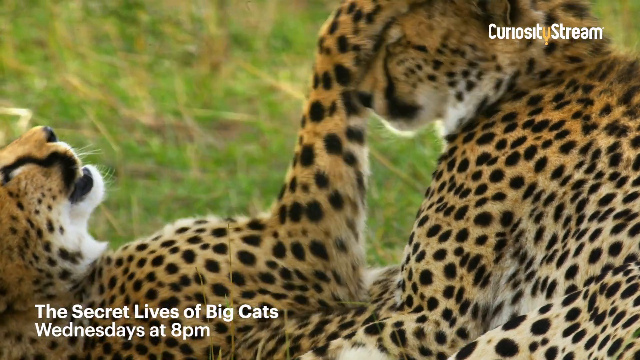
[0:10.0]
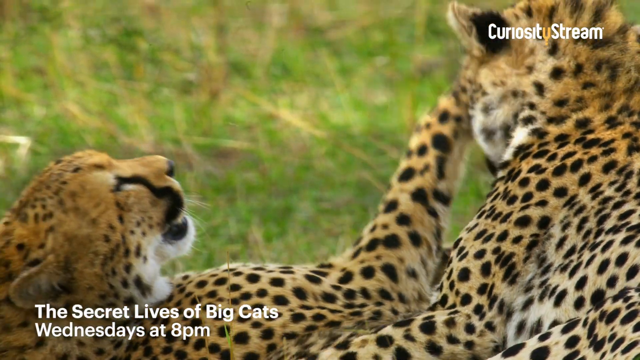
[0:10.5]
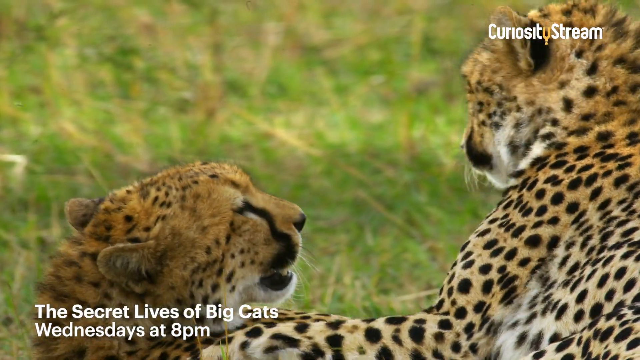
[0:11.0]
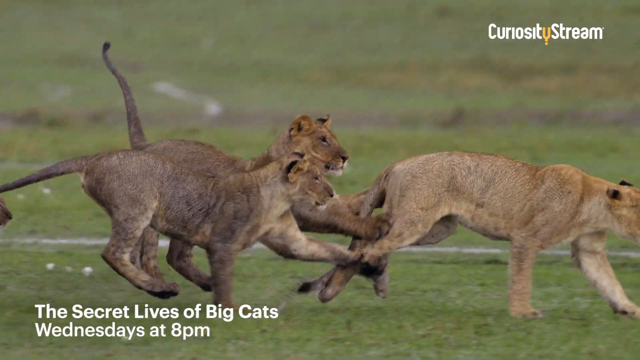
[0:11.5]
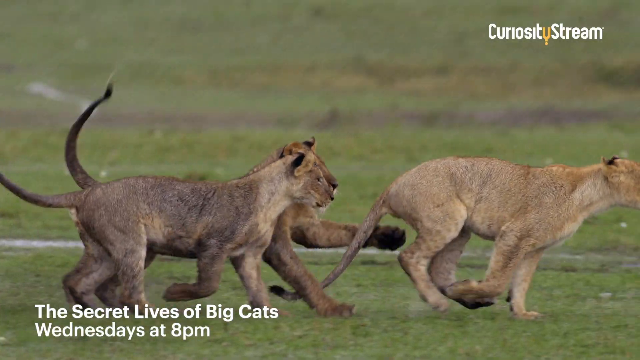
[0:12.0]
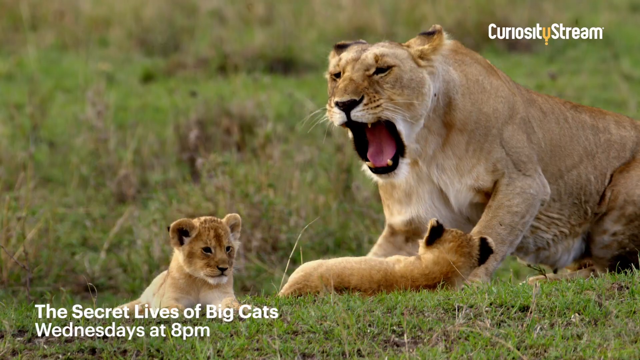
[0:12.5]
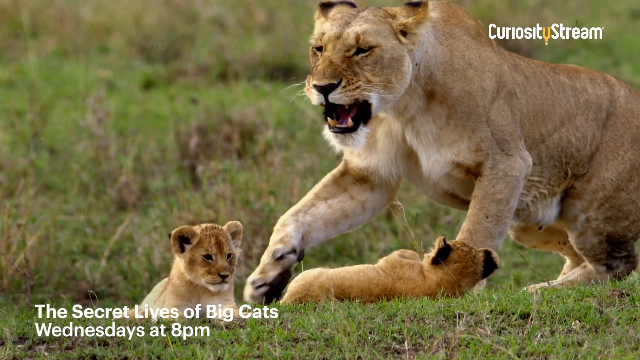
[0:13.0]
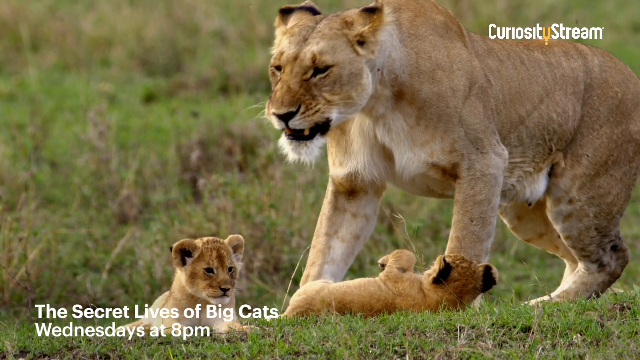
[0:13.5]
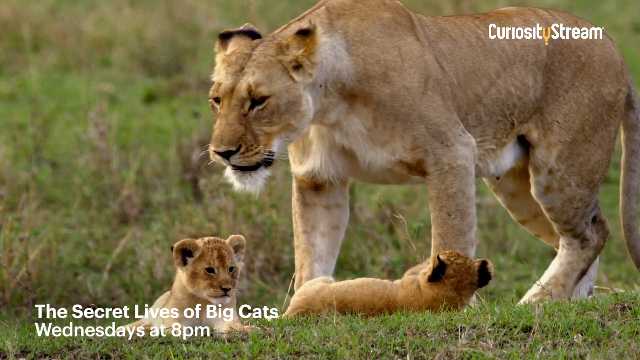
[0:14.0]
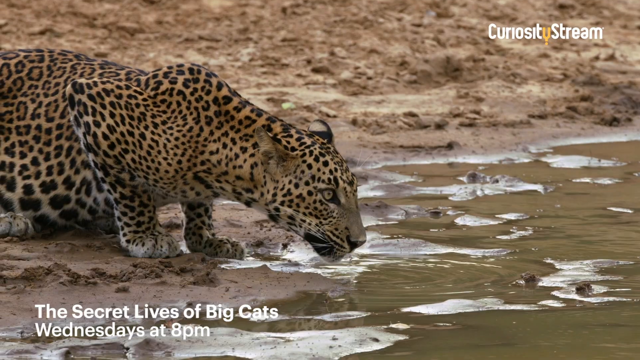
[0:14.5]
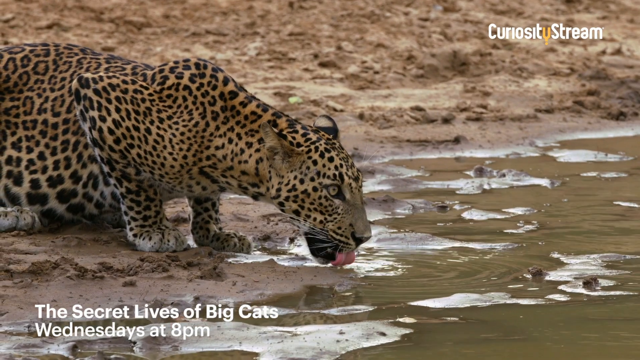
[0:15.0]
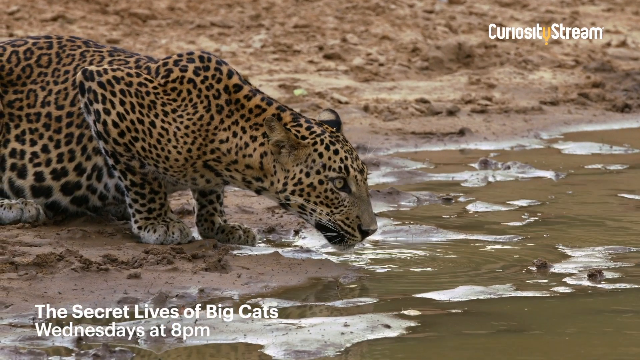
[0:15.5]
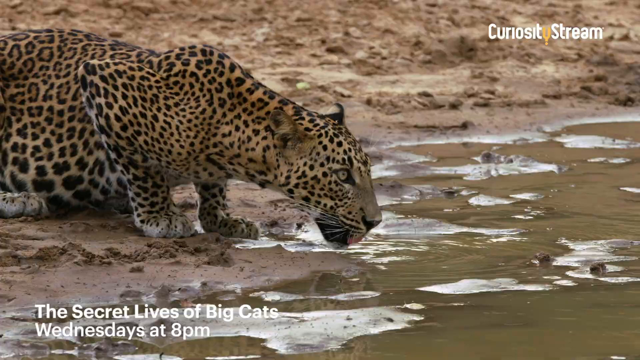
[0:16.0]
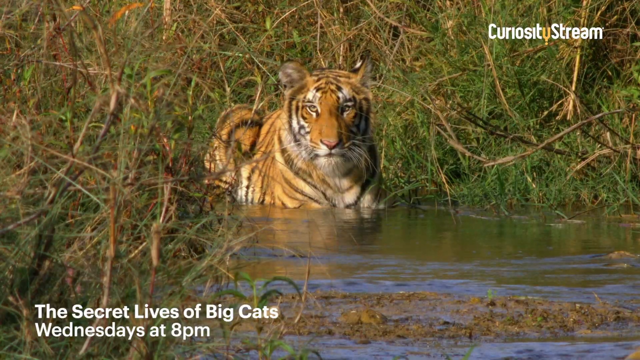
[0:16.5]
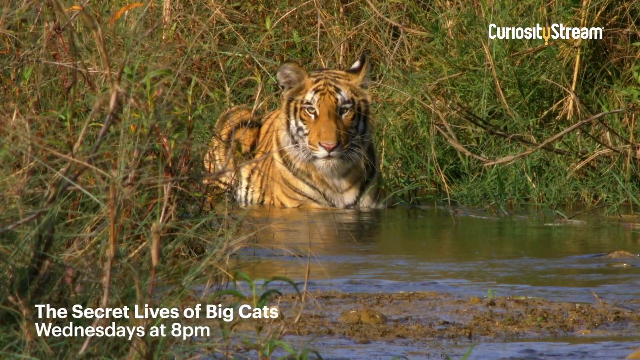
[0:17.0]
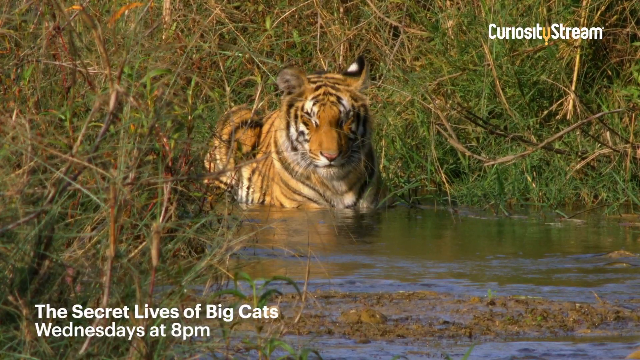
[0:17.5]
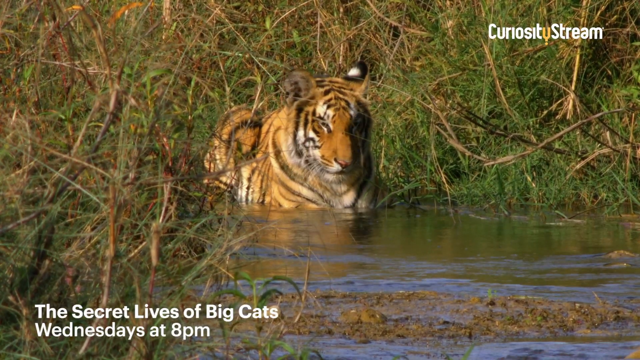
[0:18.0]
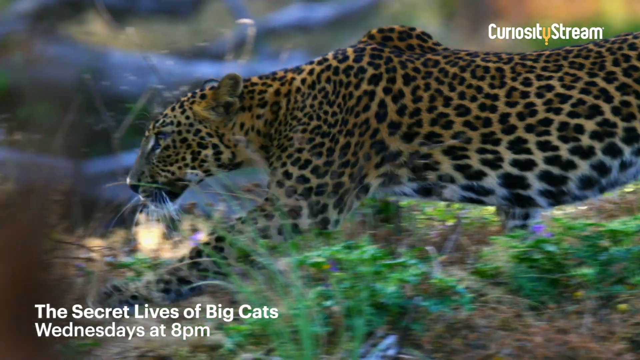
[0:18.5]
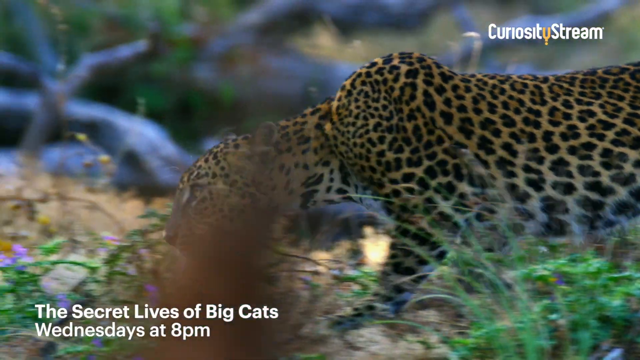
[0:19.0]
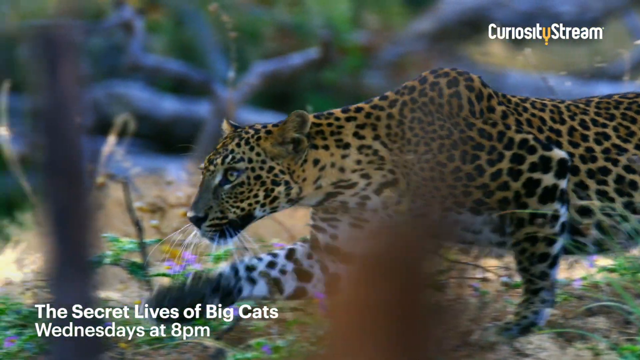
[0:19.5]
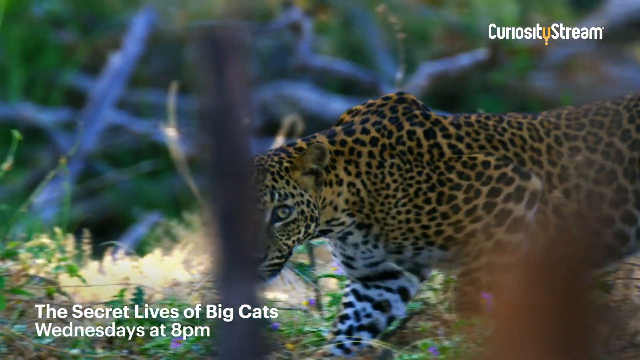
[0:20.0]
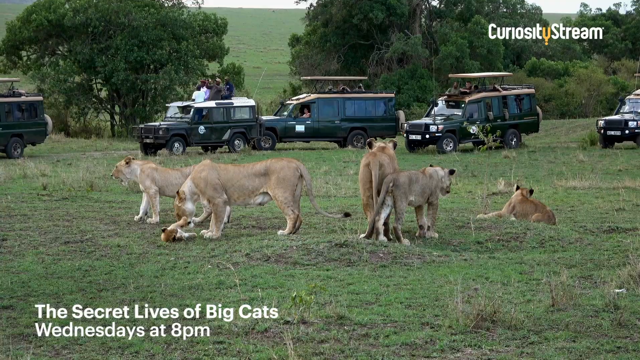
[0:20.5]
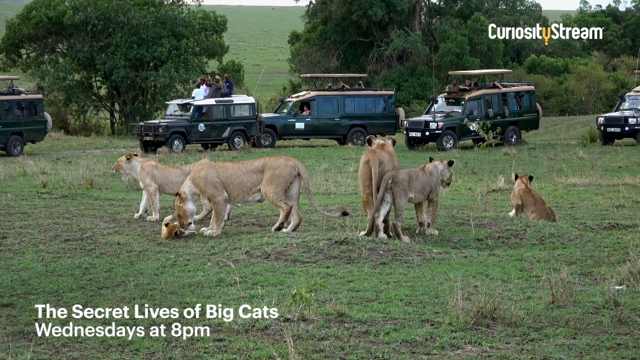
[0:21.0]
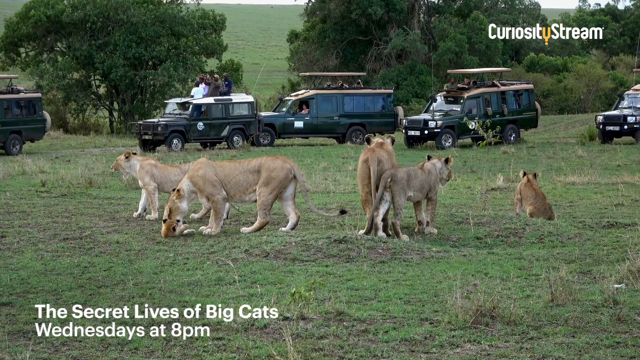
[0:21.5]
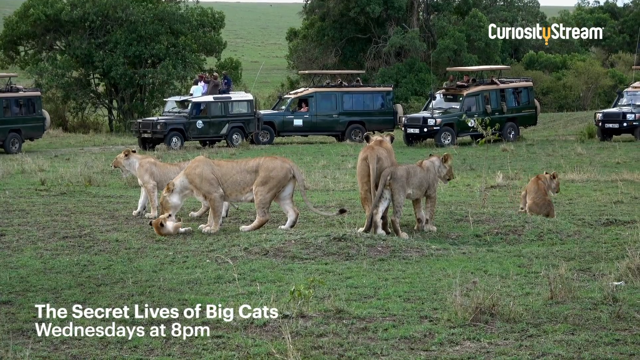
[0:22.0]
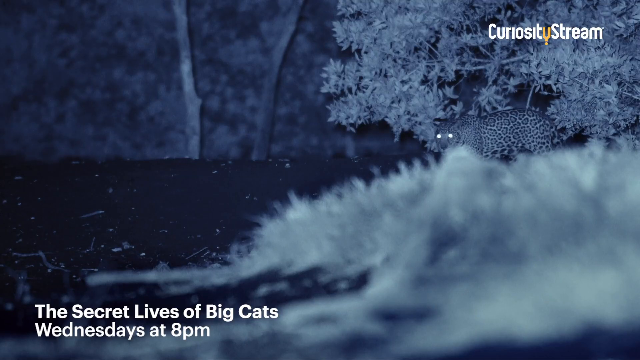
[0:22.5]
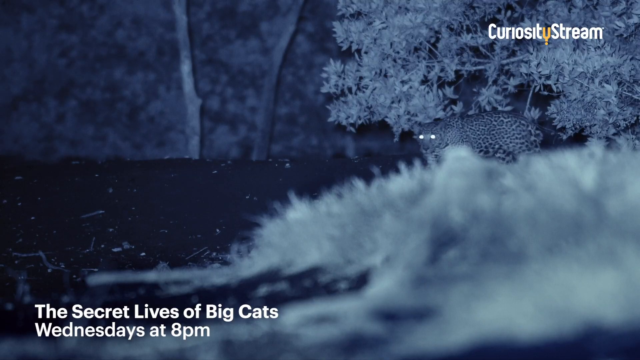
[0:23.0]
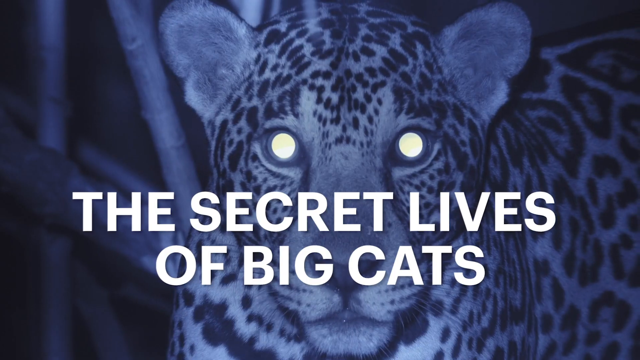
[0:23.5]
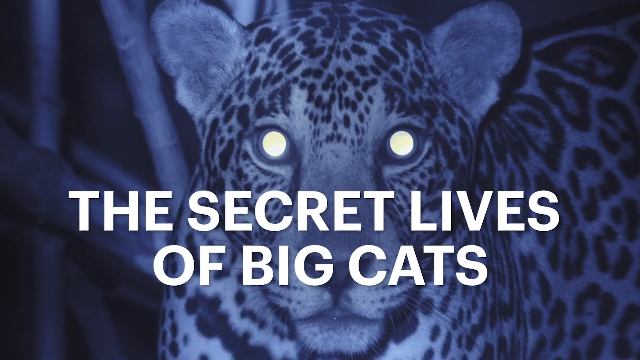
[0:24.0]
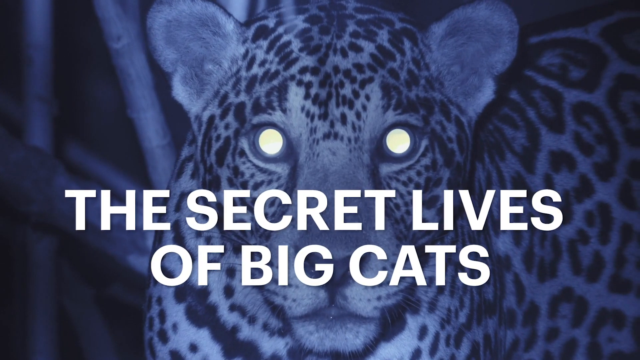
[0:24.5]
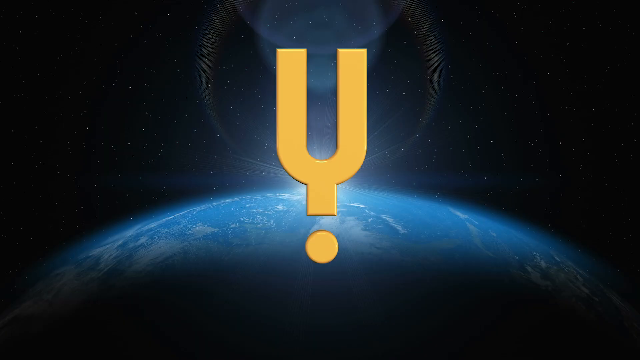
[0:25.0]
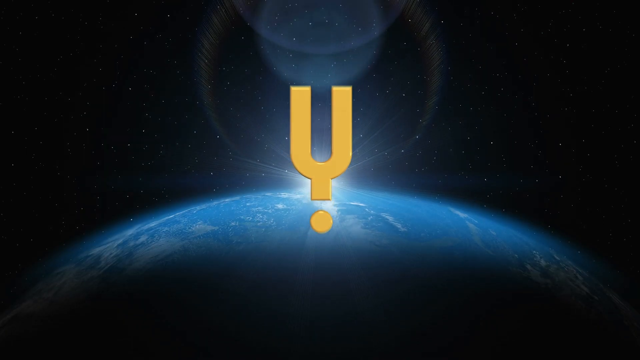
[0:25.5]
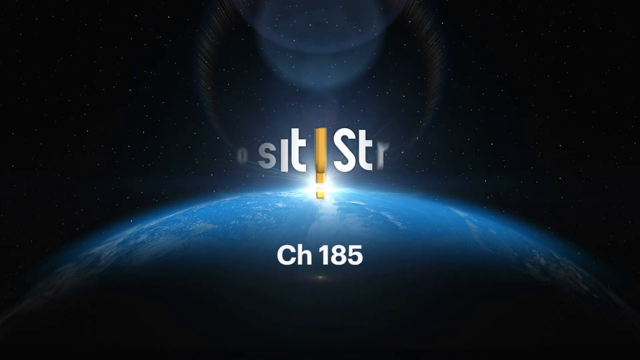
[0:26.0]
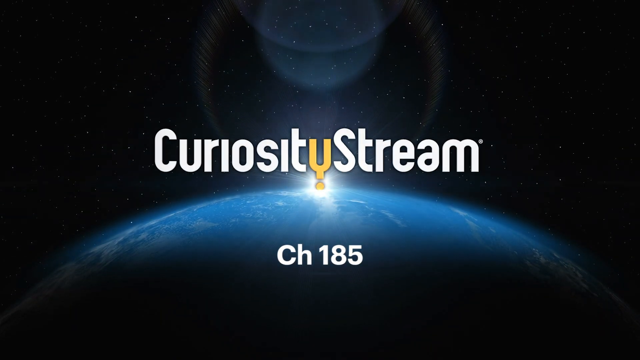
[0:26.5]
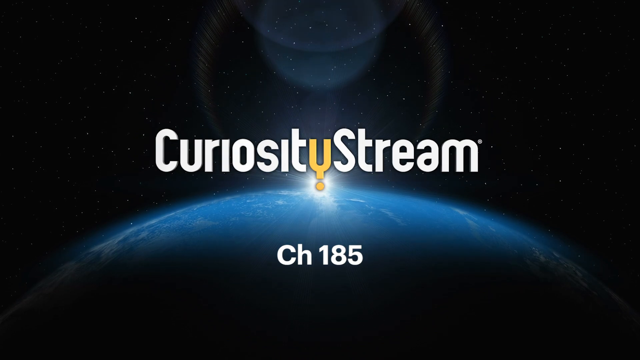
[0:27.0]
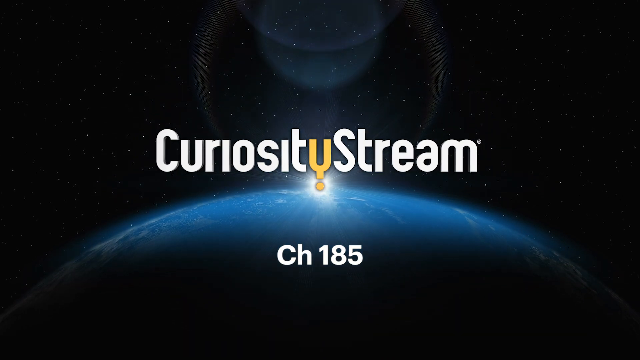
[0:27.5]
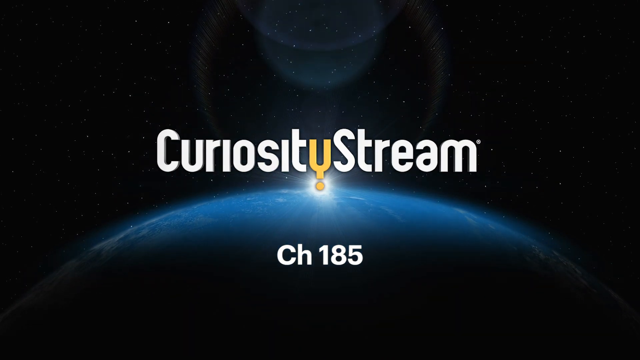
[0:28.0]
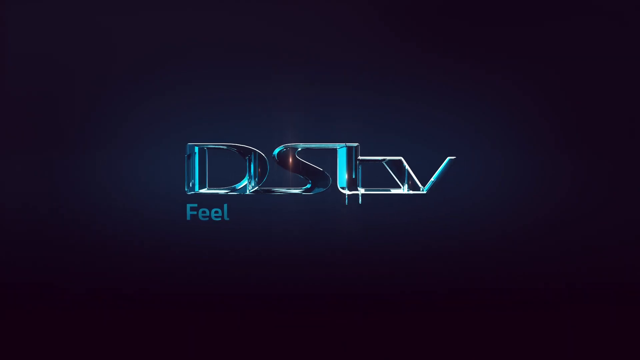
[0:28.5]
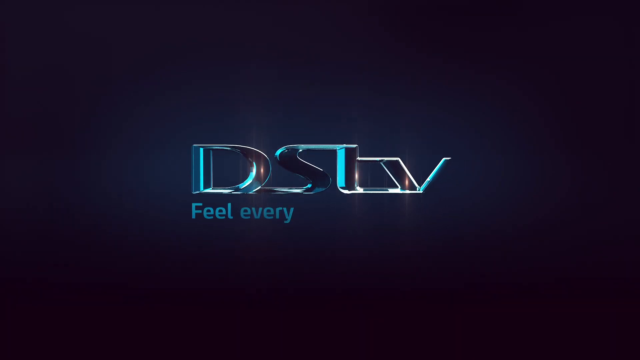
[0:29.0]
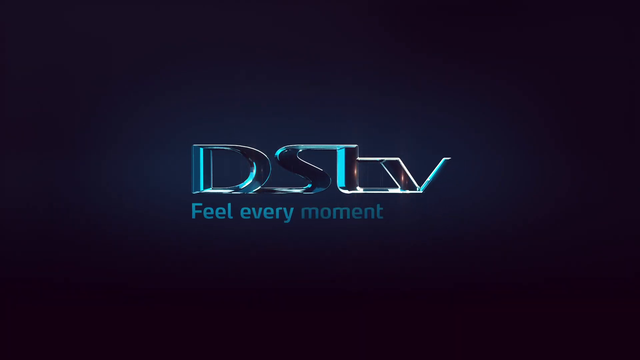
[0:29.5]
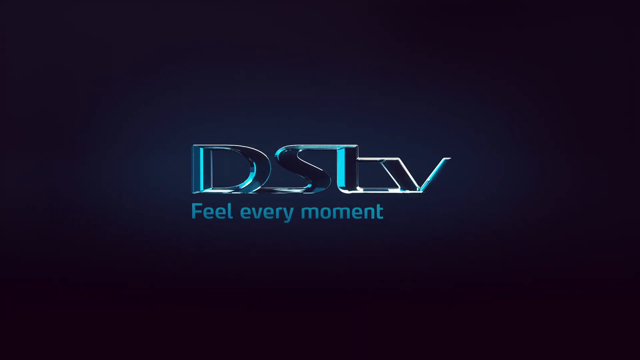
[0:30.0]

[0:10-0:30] The advertisement for the show The Secret Lives of Big Cats, on Wednesdays at 8 p.m., continues. Spotted cats appear, along with lions running, a lion with lion cubs, a panther, and a tiger standing in water. One of the big cats is hunting. Lots of vehicles are visible at a distance, and the big cats are staring at them; the people in them might be tourists checking out the animals. The scene then shifts to nighttime, with the show's title, The Secret Lives of Big Cats, and the information that it is on channel 185, along with a message about feeling every moment.